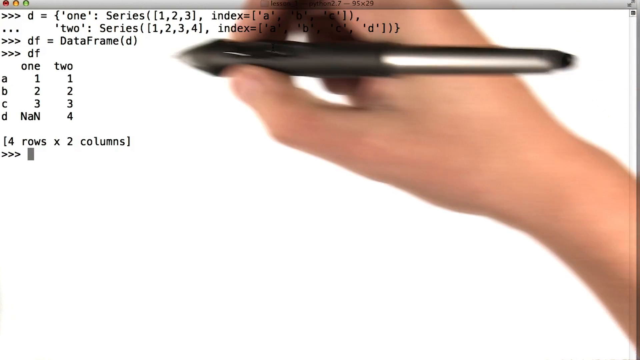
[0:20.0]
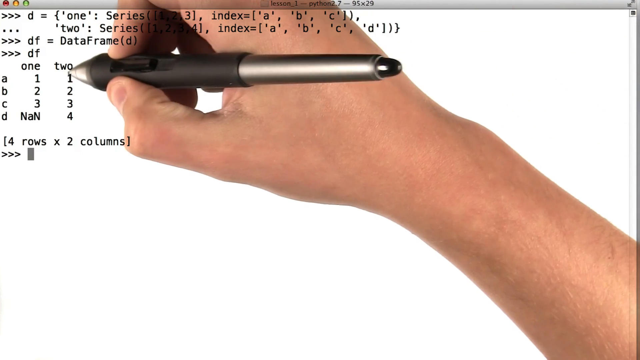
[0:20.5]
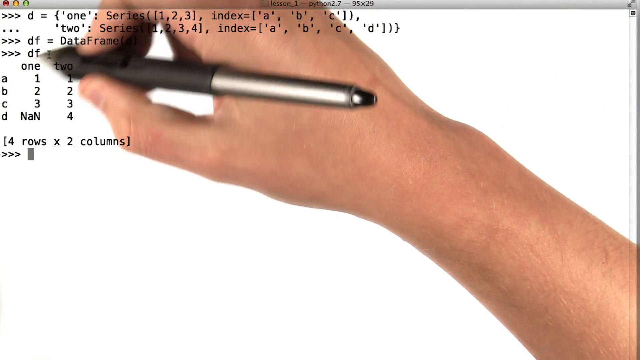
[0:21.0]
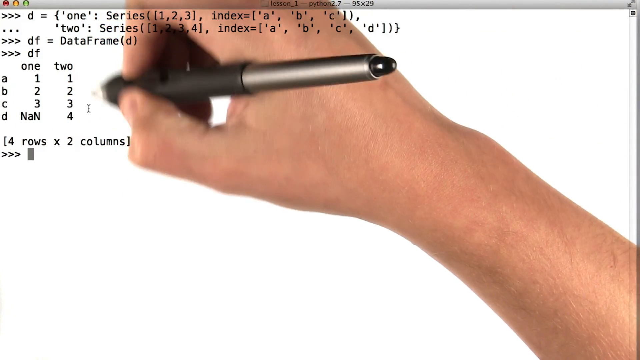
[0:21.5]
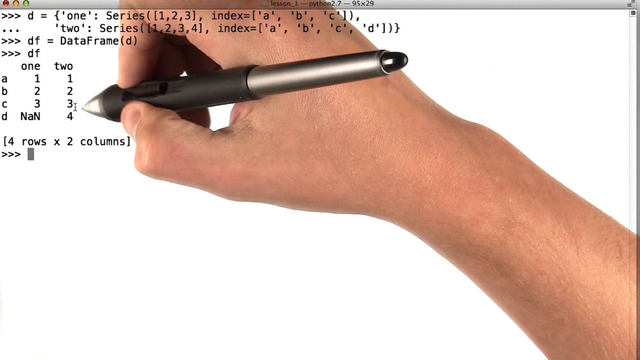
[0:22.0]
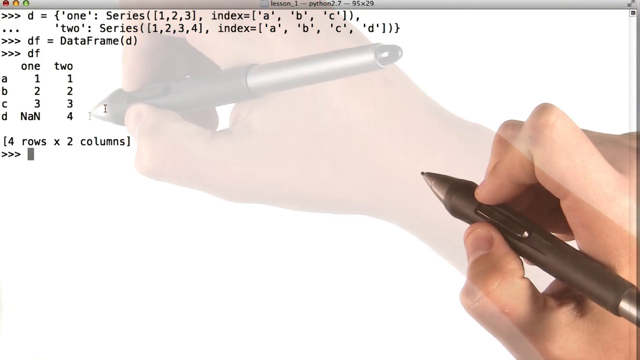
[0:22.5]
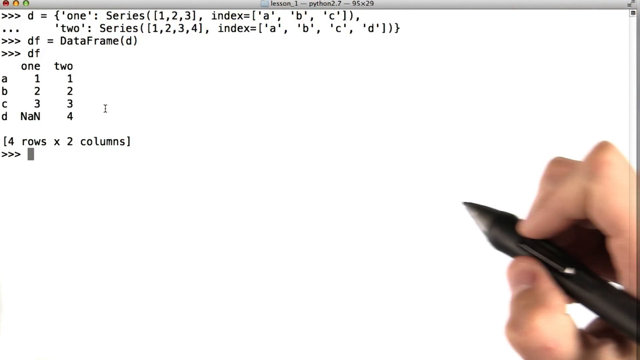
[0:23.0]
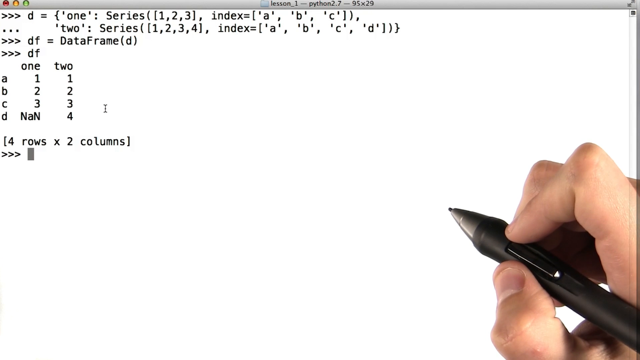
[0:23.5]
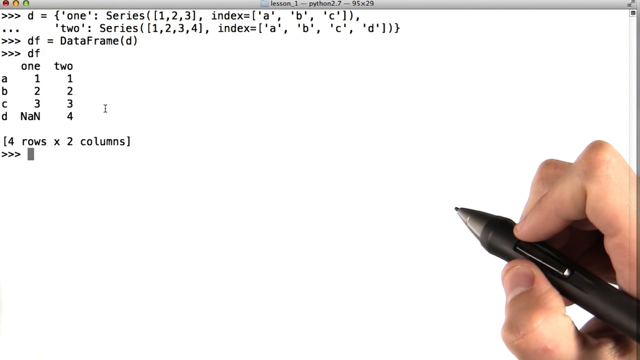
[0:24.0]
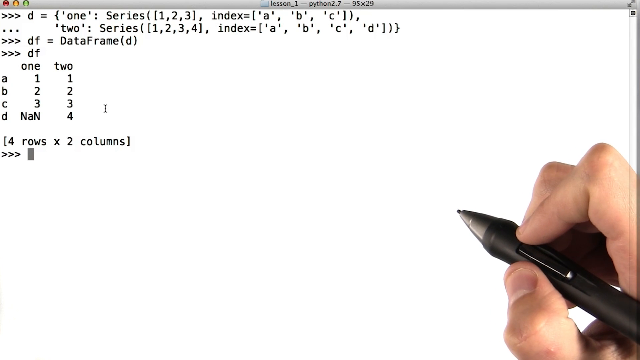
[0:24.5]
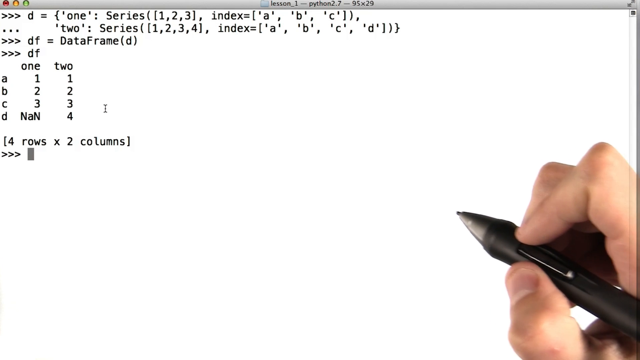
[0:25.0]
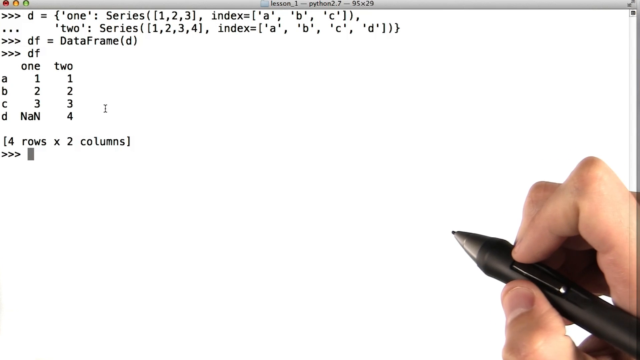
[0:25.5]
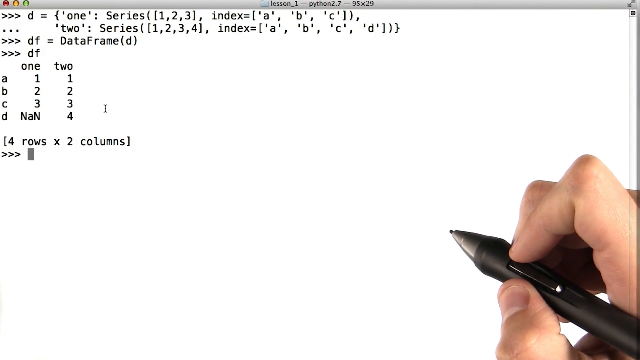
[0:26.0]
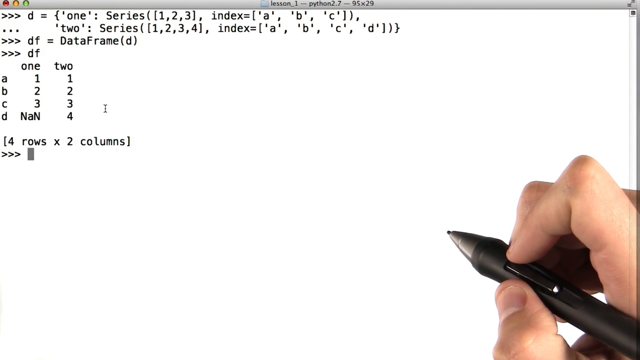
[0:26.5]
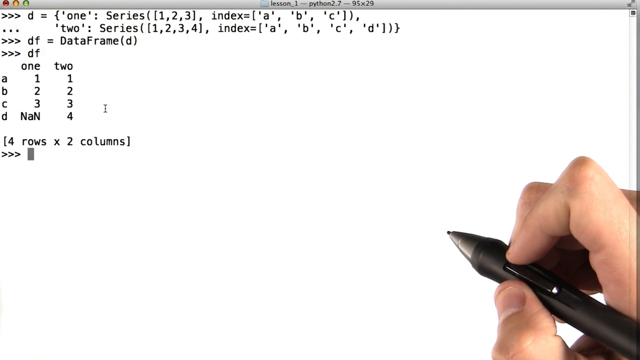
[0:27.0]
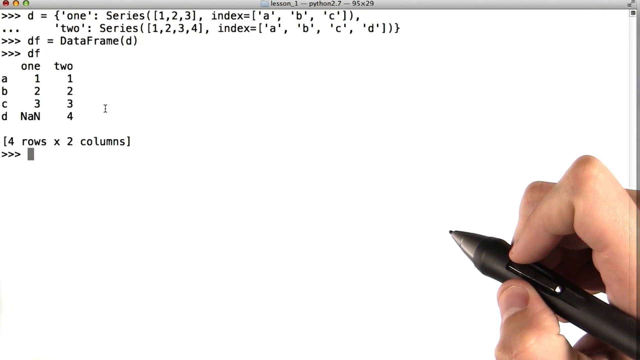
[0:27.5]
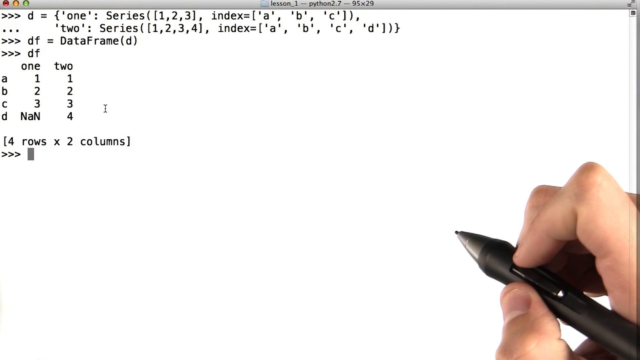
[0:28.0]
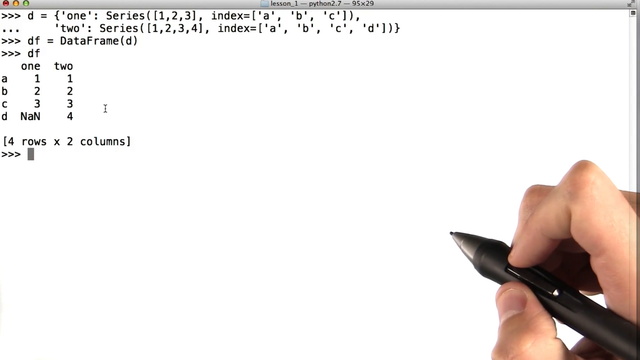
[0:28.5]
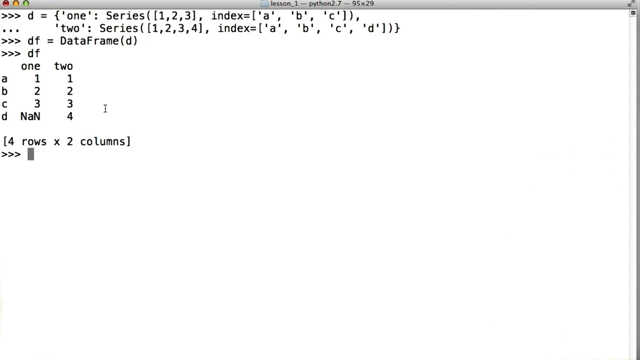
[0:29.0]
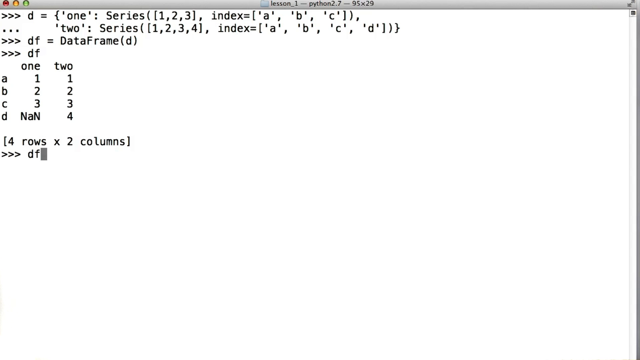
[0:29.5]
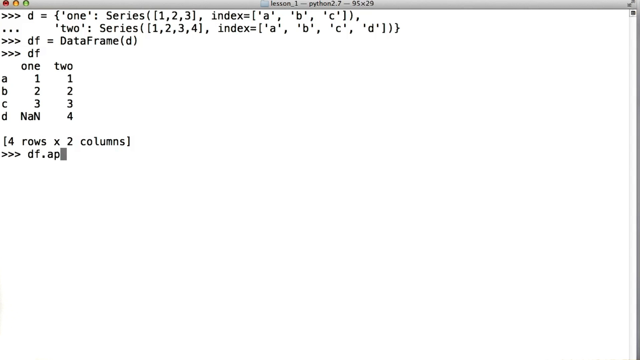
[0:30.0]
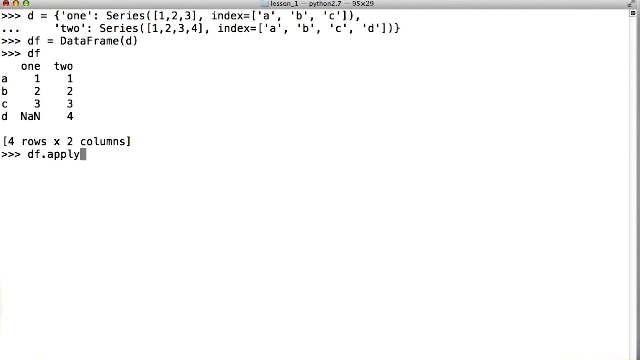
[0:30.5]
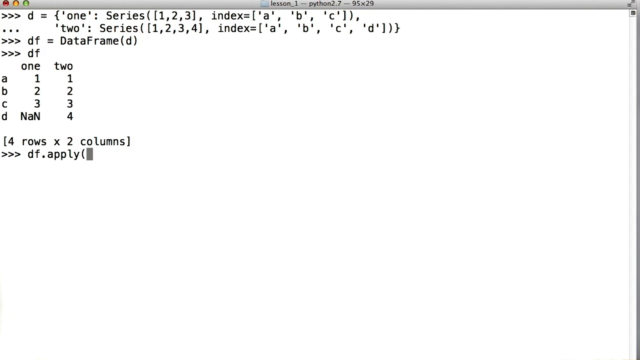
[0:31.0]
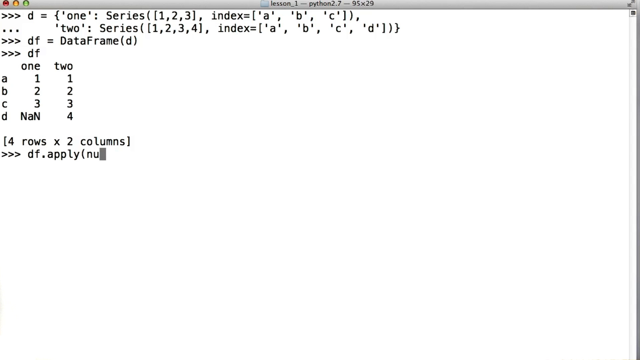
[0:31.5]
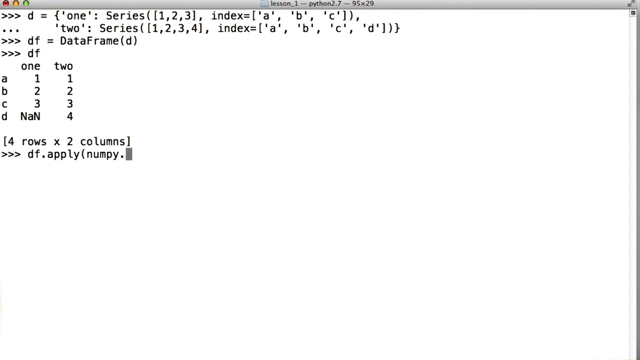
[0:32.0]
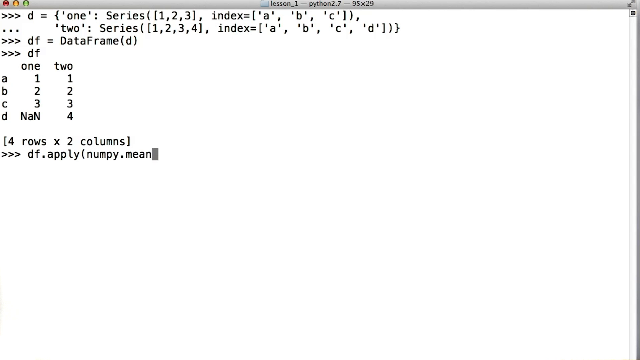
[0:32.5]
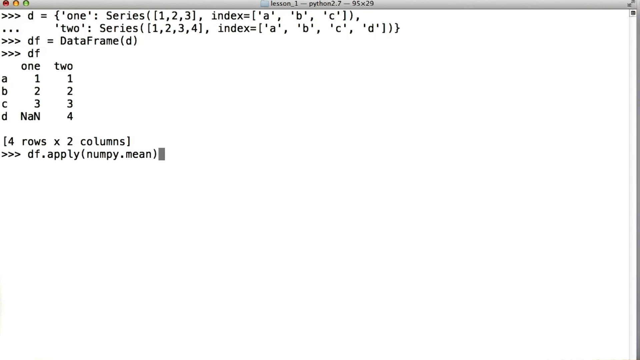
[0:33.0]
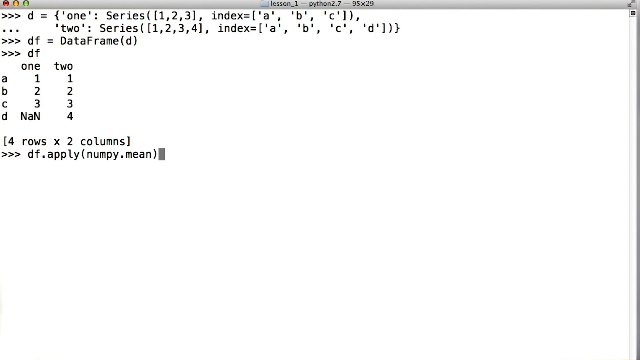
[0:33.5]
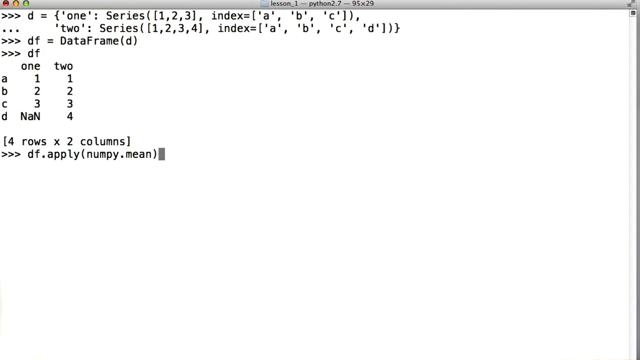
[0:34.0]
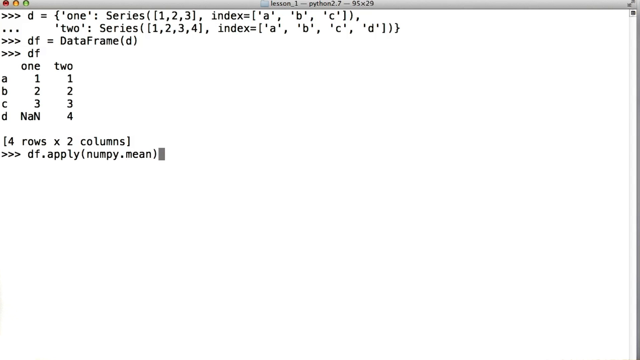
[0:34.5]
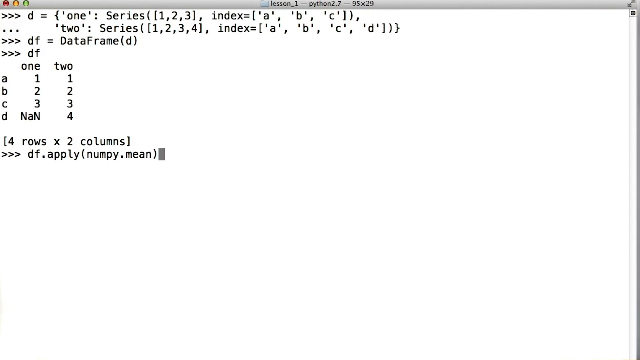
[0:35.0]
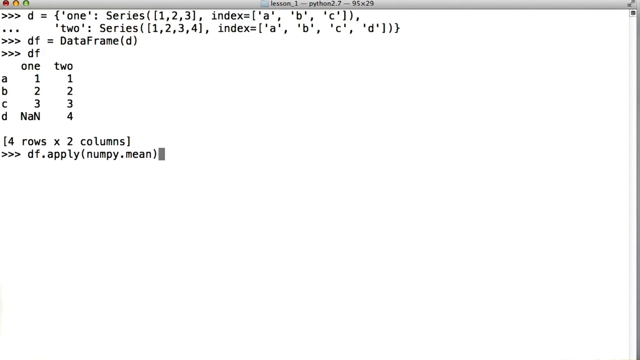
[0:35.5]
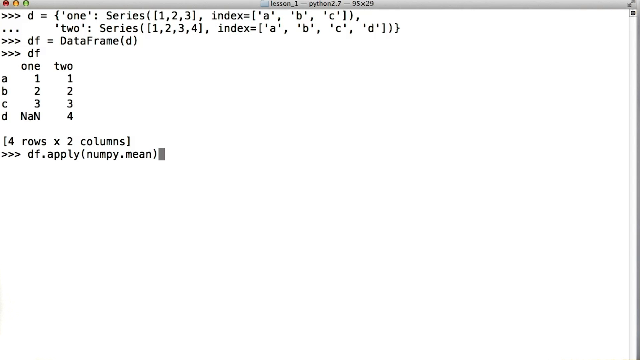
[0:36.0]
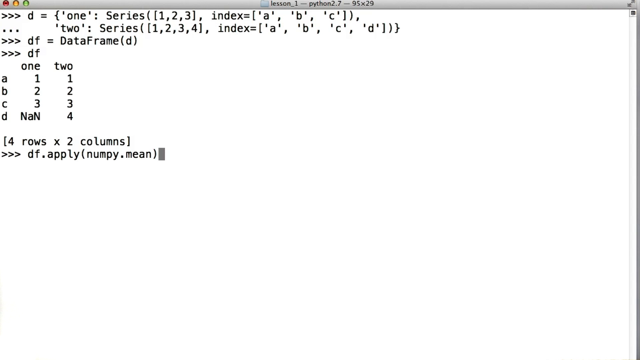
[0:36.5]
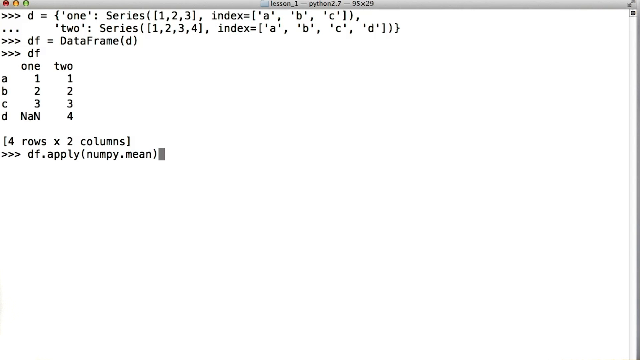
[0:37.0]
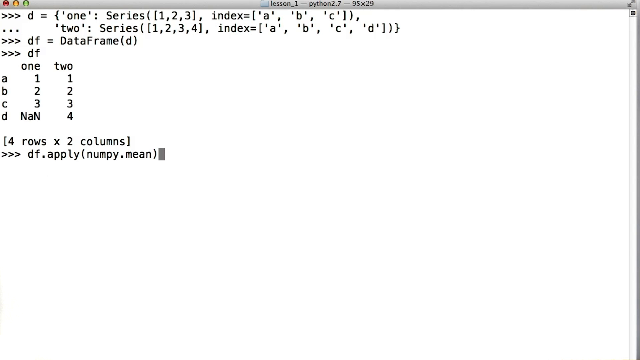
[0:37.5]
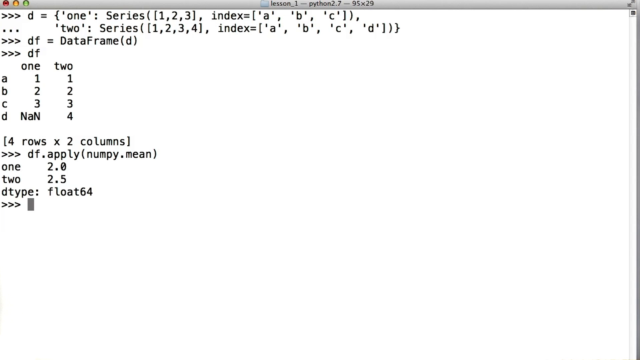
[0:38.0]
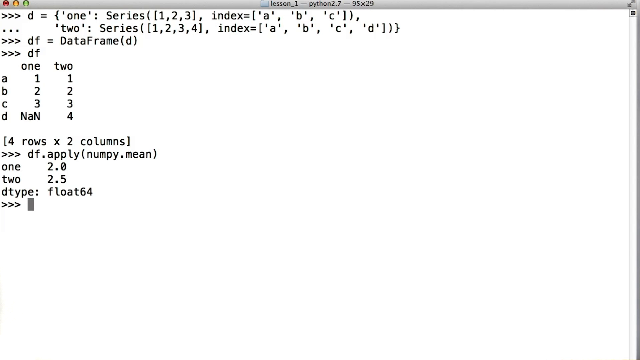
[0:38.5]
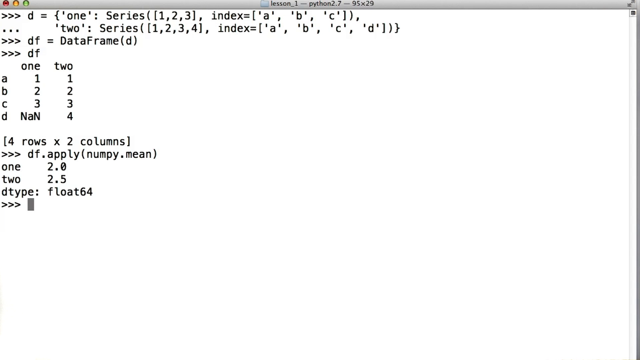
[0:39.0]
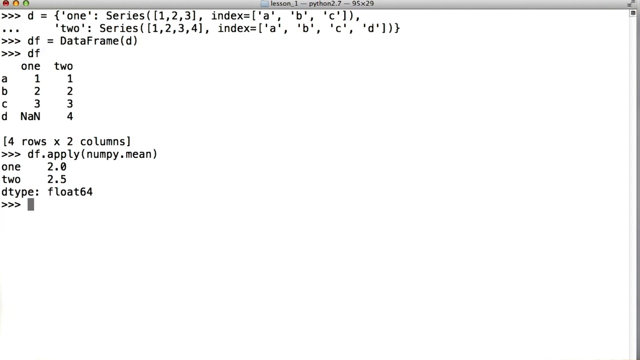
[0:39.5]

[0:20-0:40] The person appears to be tutoring or lecturing a student, moving his hand around the page as he does so. A new line of code using apply is added, and the output shows 1 as 2.0 and 2 as 2.5, along with a Dtype line. The man moves the electronic pen as an indication of what he is referring to. A table with columns labeled 1 and 2 shows A with 1 and 1, B with 2 and 2, C with 3 and 3, and D with NaN and 4, making four rows by two columns.